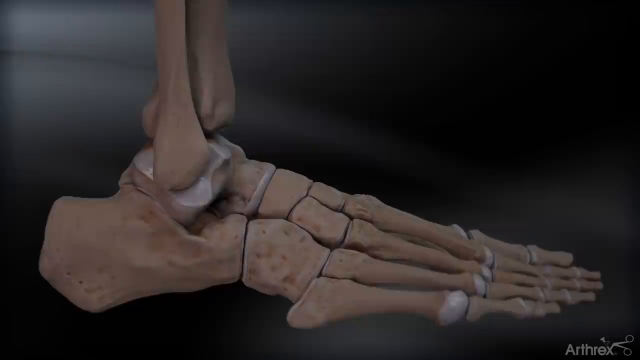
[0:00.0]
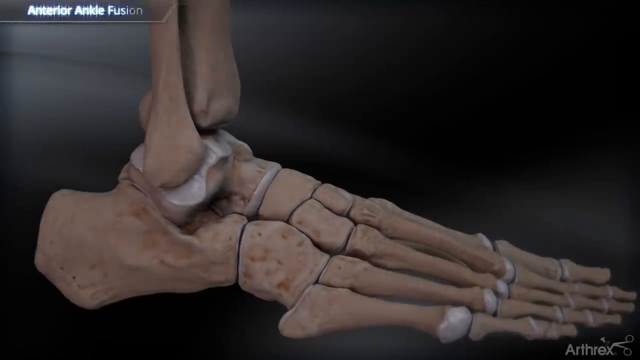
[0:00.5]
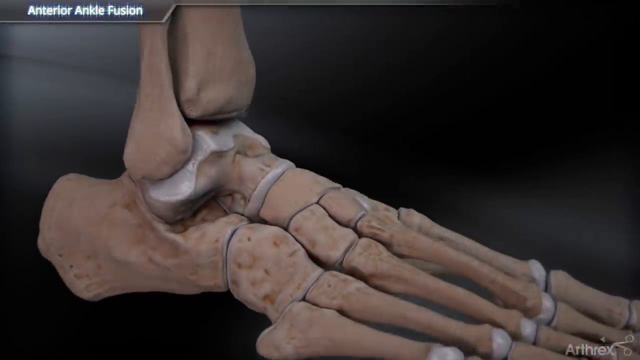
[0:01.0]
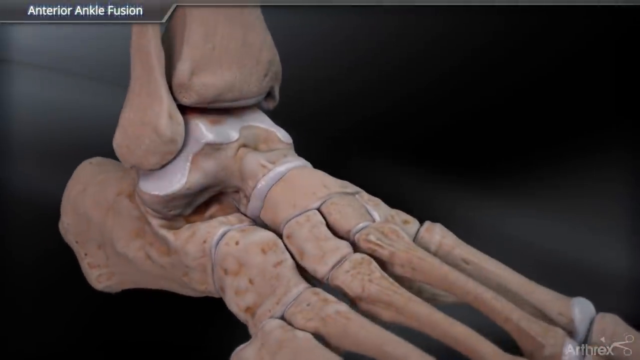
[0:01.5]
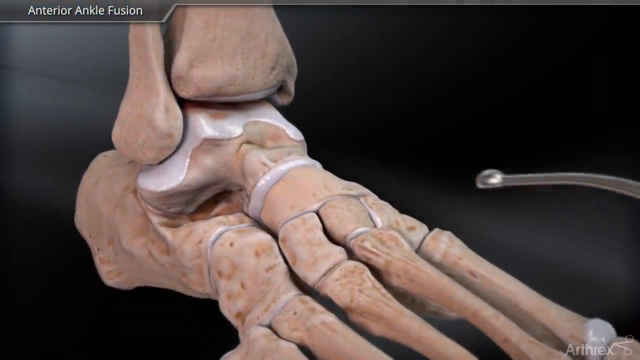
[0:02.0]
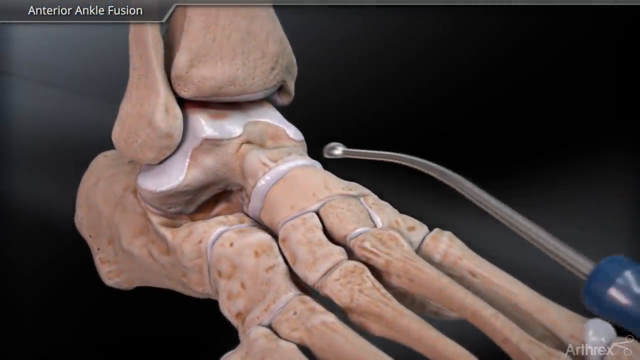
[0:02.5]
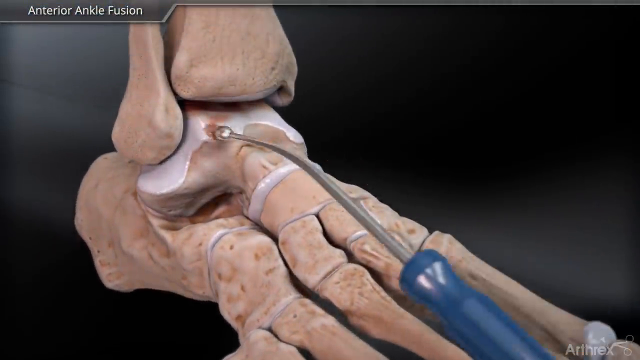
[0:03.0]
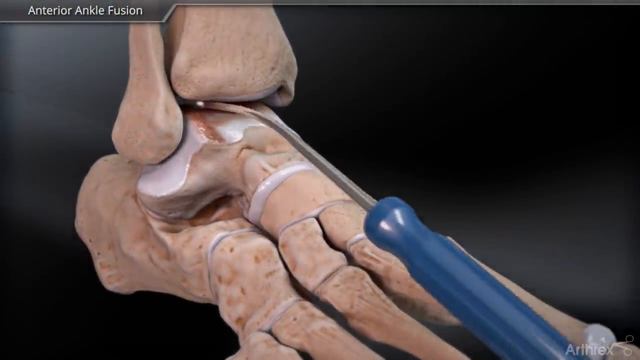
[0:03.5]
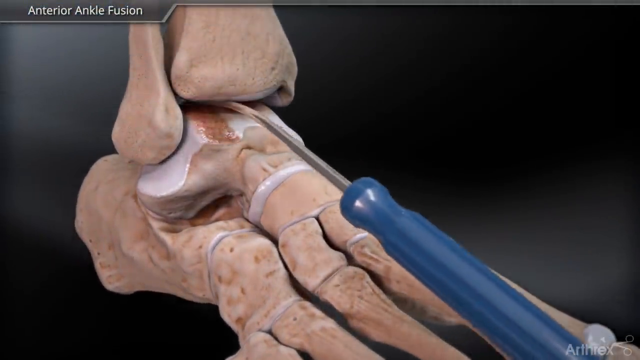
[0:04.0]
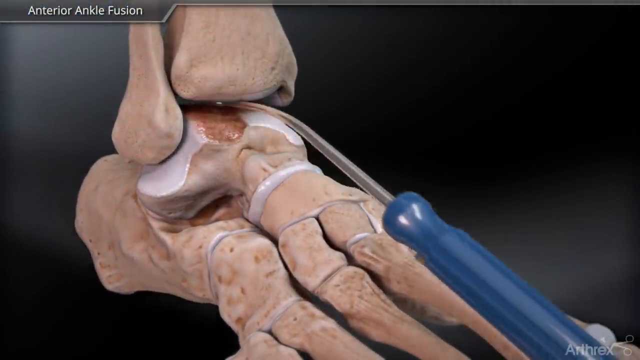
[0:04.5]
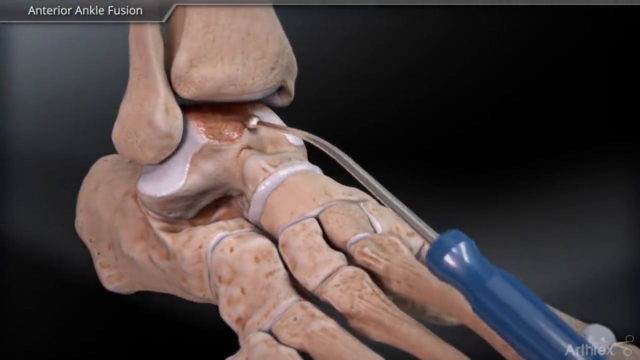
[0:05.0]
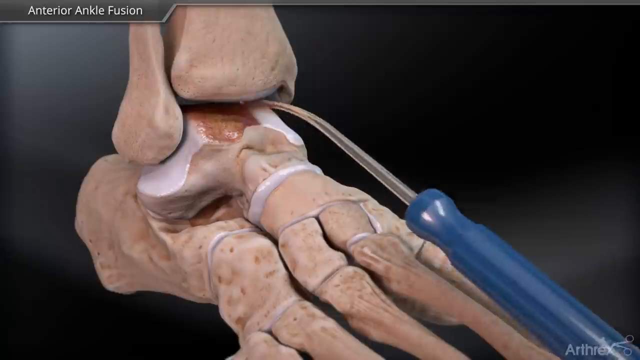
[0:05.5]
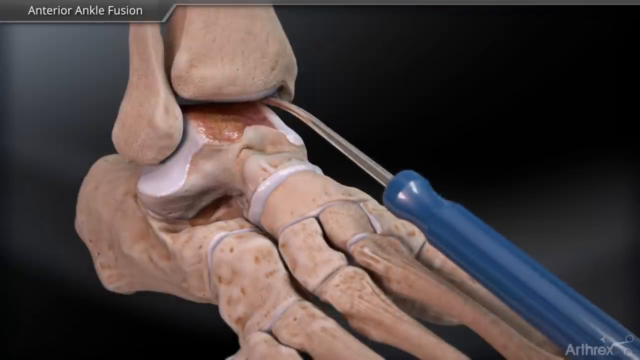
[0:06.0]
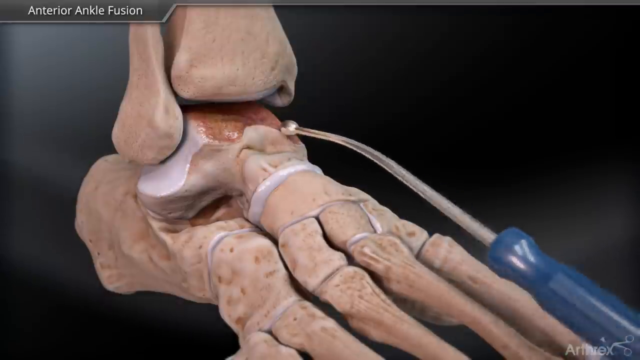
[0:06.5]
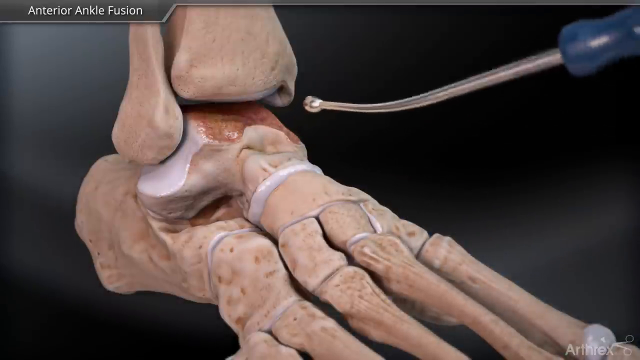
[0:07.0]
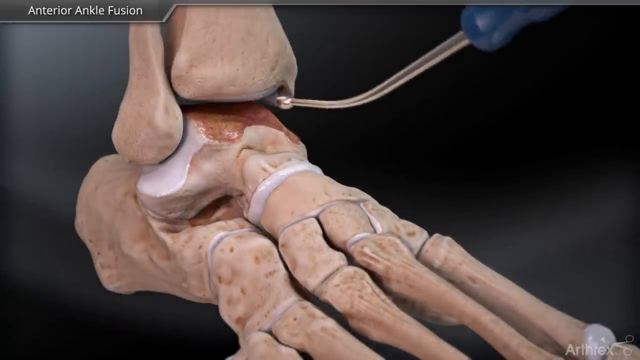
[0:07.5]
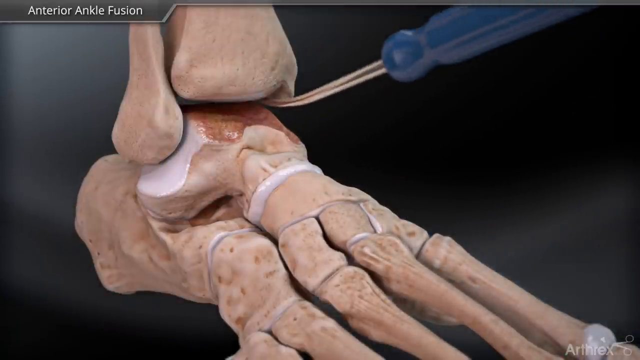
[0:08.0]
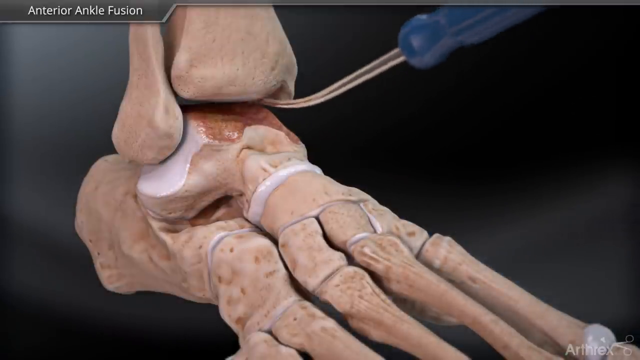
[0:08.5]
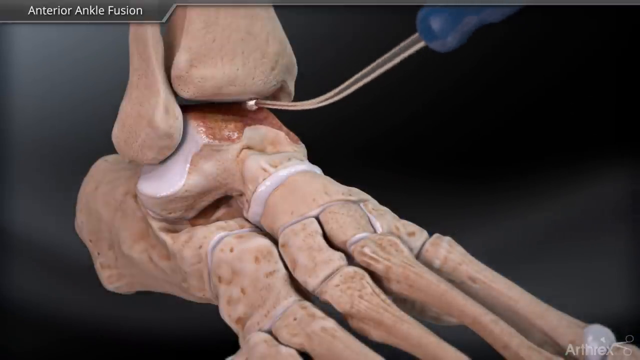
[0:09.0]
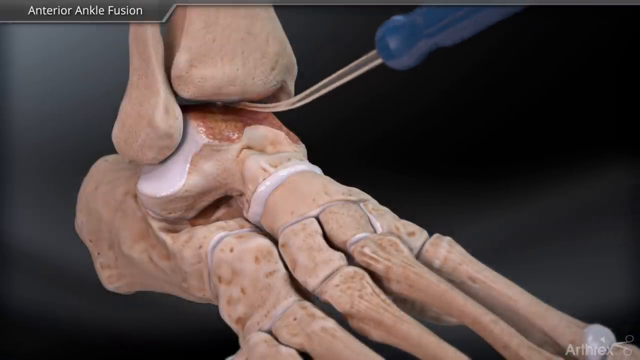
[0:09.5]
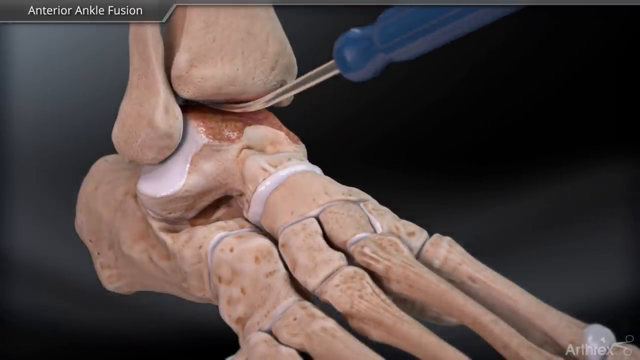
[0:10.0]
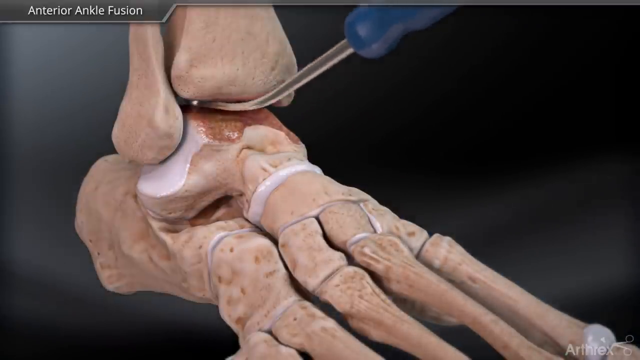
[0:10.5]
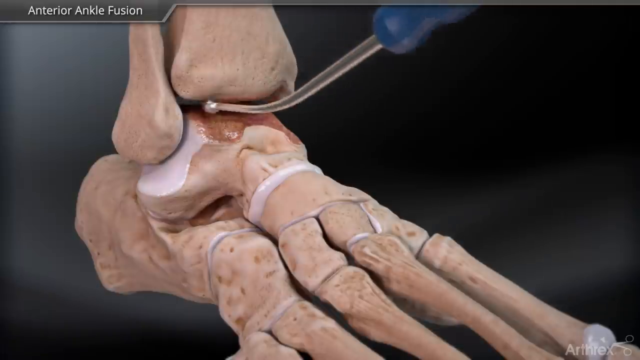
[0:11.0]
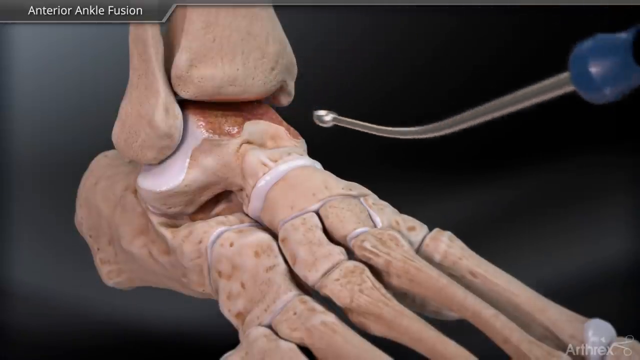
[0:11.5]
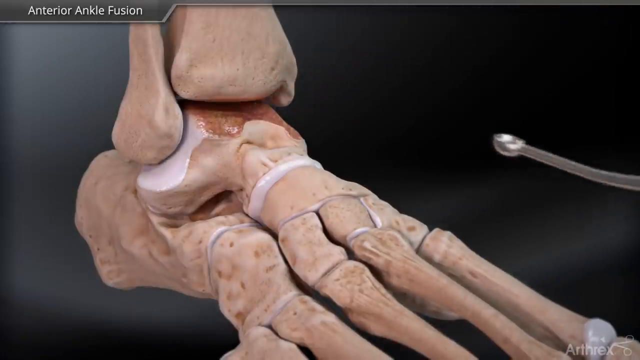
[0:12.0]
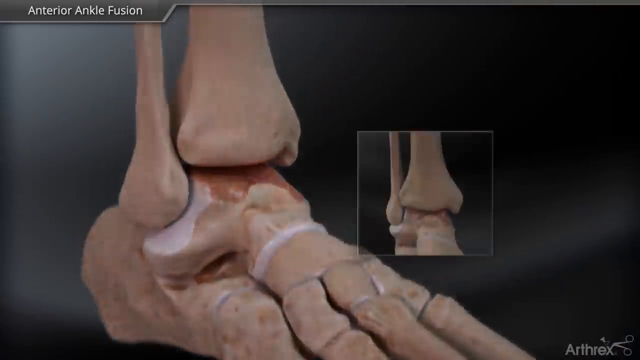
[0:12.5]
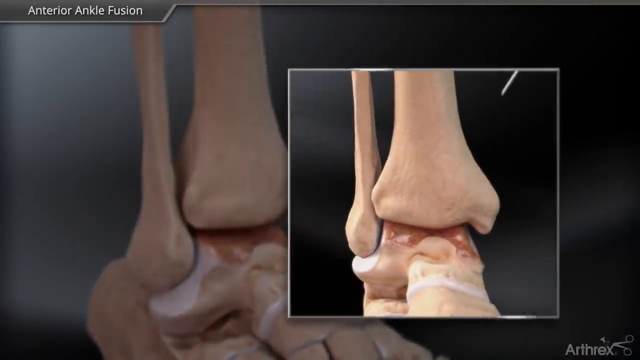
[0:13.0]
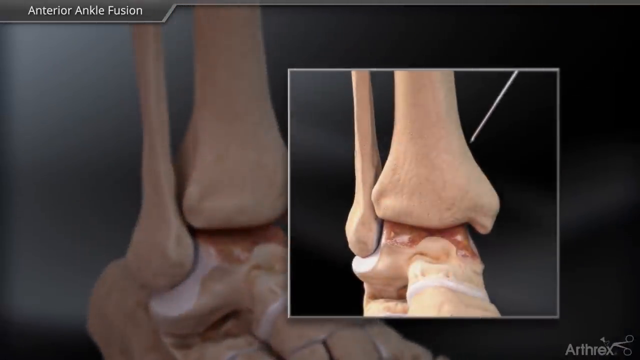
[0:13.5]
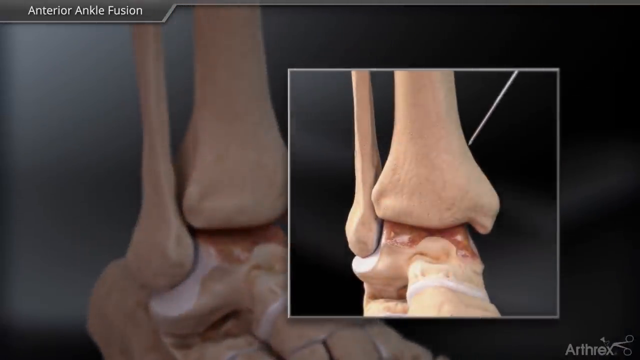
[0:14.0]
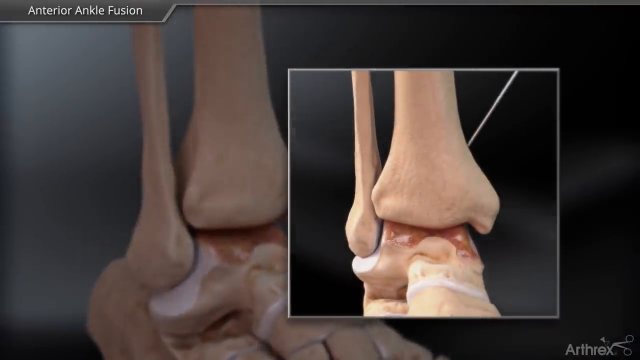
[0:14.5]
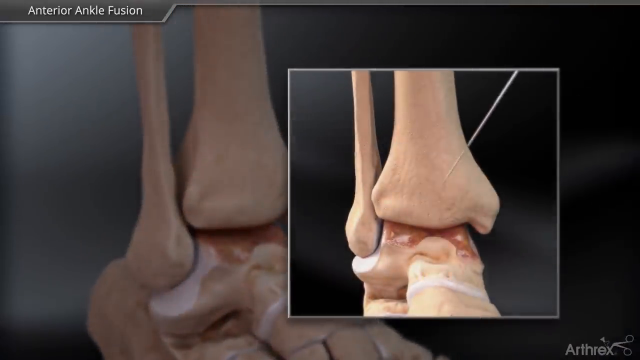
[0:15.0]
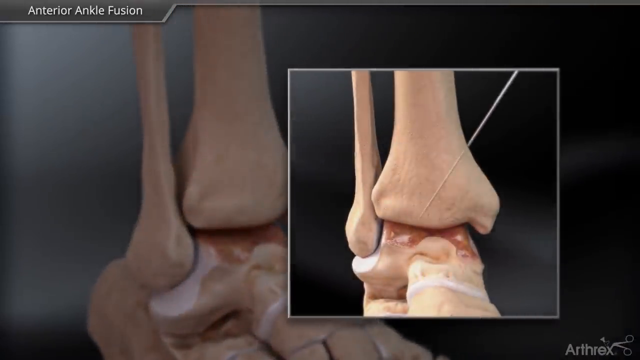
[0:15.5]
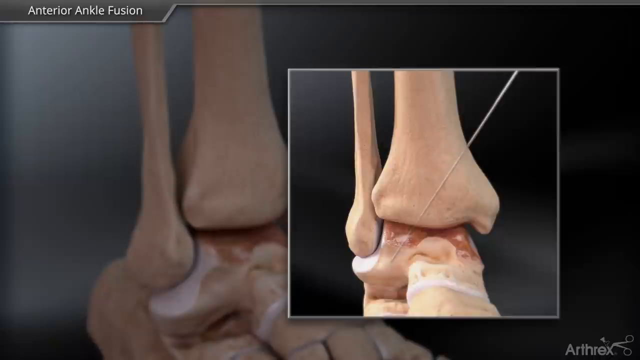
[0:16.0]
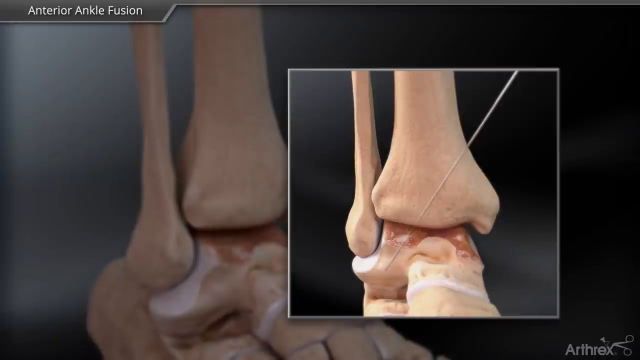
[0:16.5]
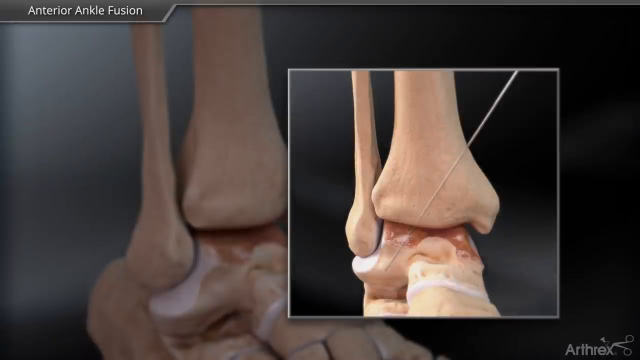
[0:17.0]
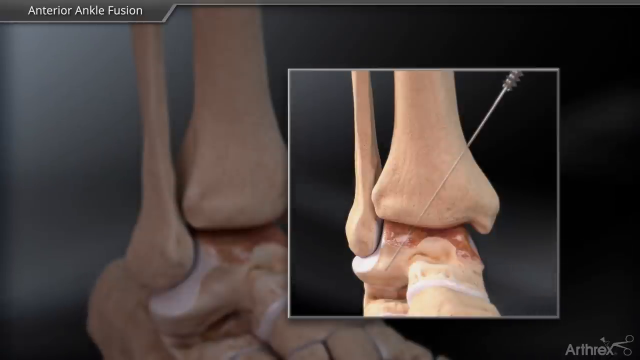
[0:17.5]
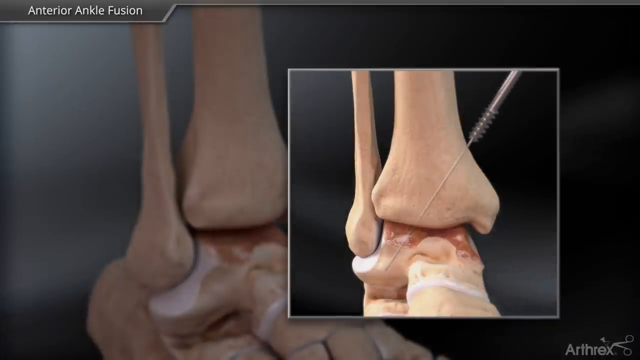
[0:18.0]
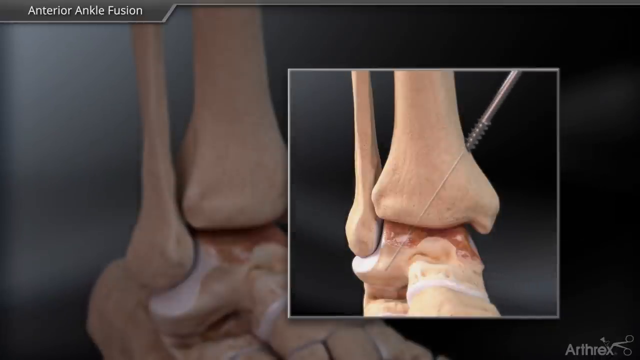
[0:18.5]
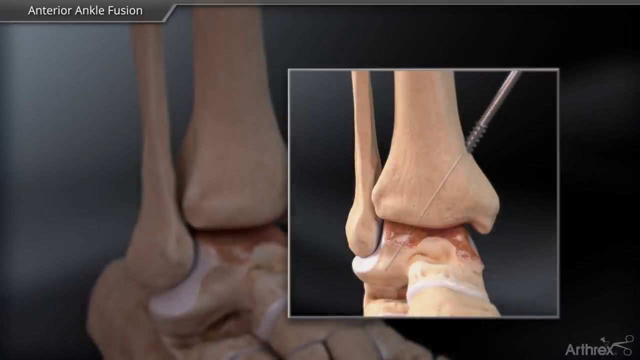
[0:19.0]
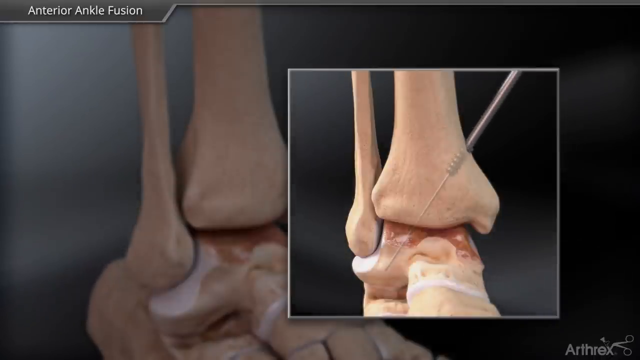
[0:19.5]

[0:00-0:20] An anatomical animation of the bones in the foot is displayed on a black and silver background. A banner at the top left of the screen reads "anterior ankle fusion". A machine or tool with a bulbous end and a blue handle is inserted into the top of the foot near the ankle, where it is used to remove or cauterize some of the bone tissue in the ankle. Something is then turned 180 degrees and put up into the cavity between the foot and ankle bone. A very large needle goes into the top of the bone into the foot; it passes through the ankle bone but does not poke out the end of it.